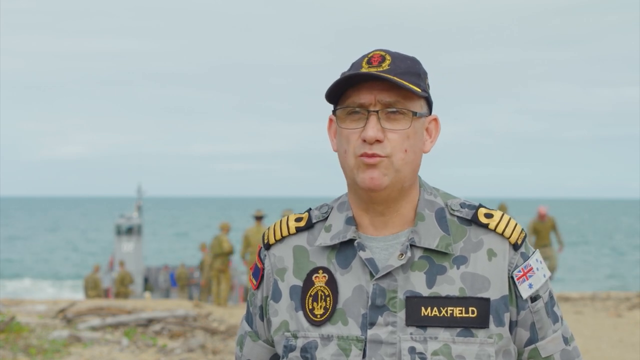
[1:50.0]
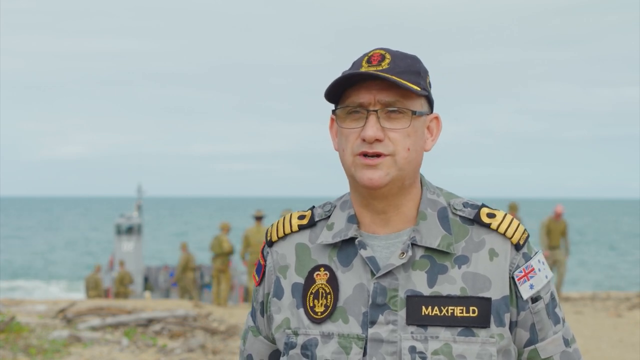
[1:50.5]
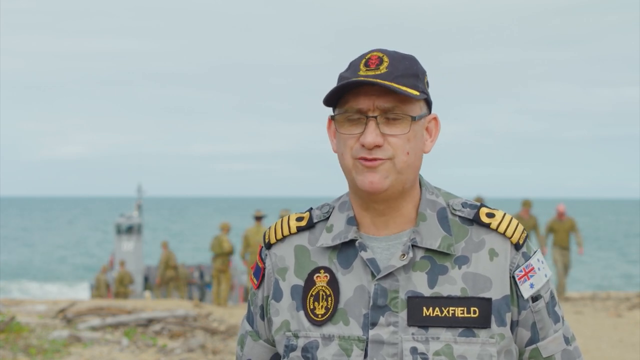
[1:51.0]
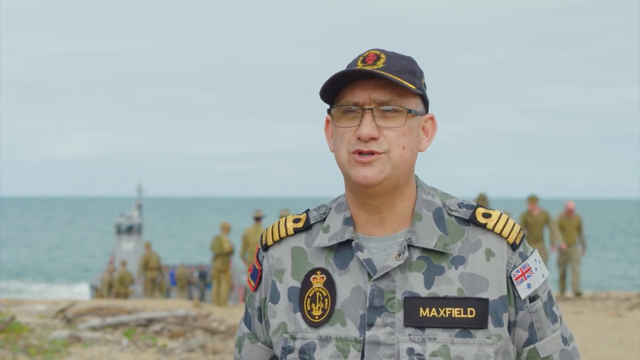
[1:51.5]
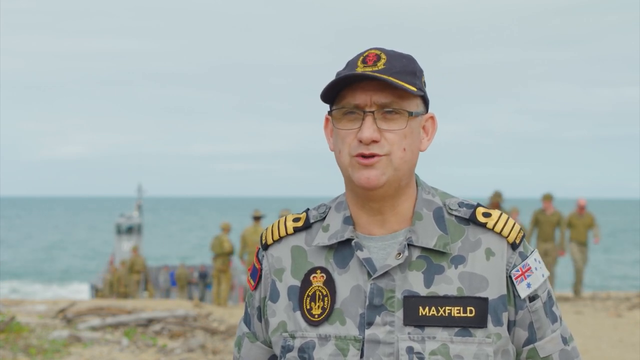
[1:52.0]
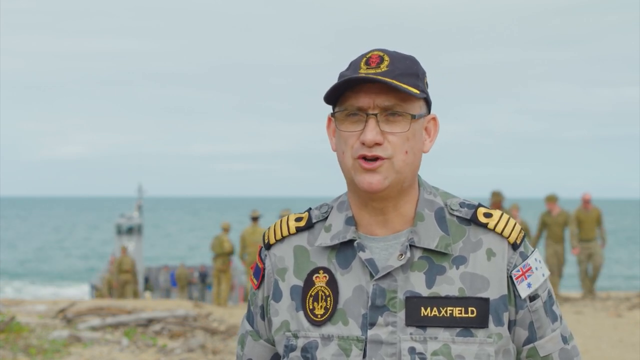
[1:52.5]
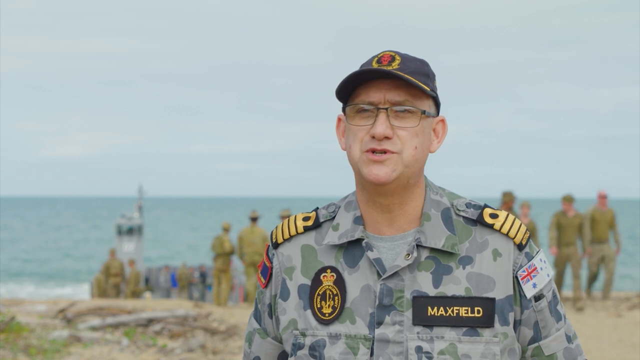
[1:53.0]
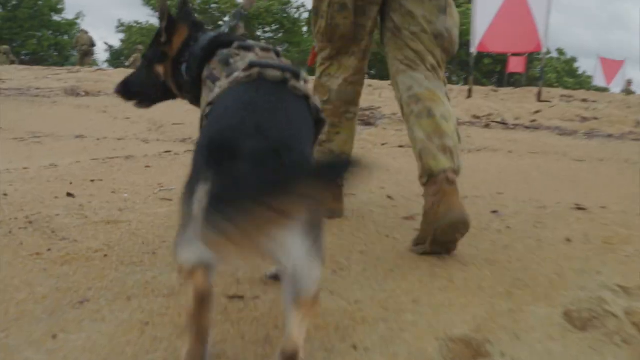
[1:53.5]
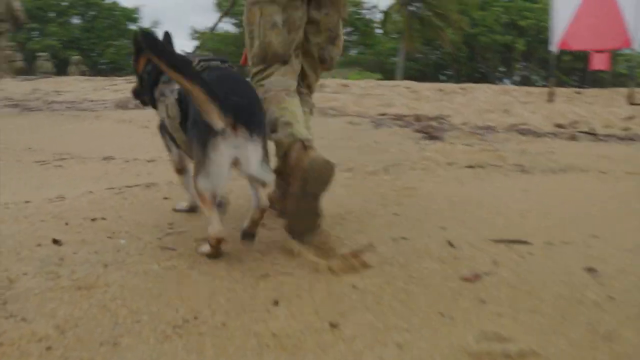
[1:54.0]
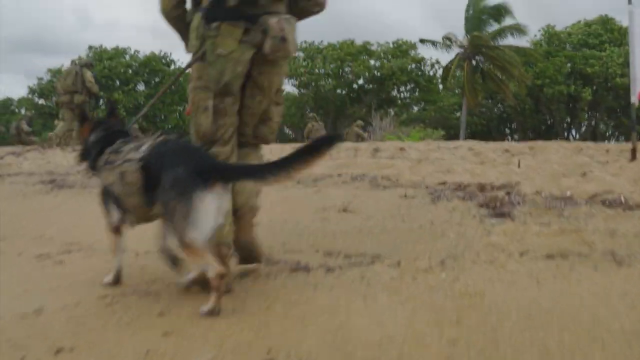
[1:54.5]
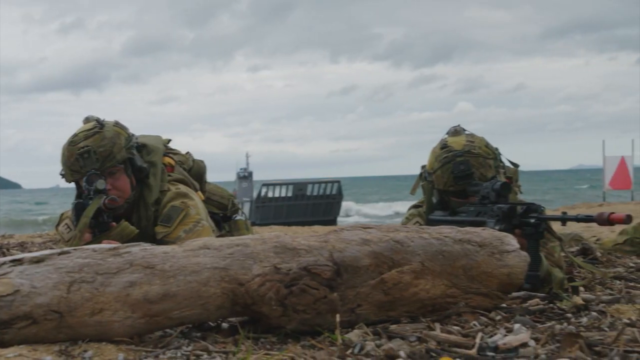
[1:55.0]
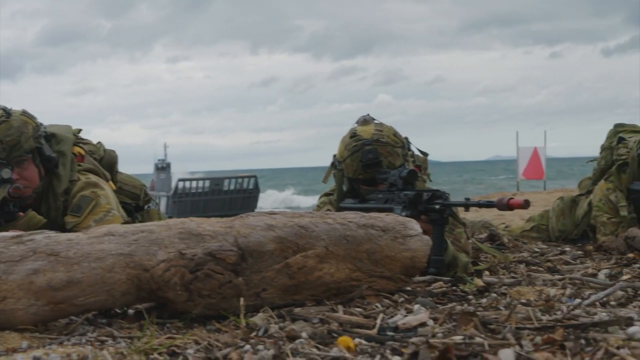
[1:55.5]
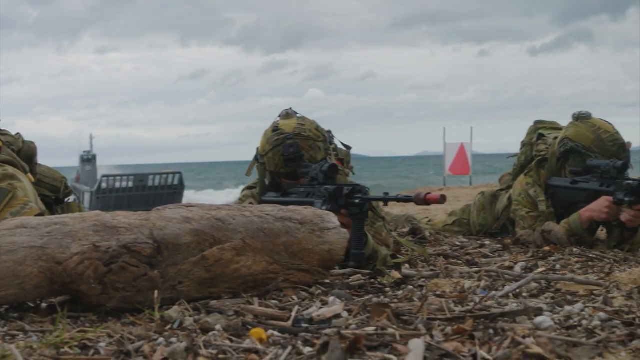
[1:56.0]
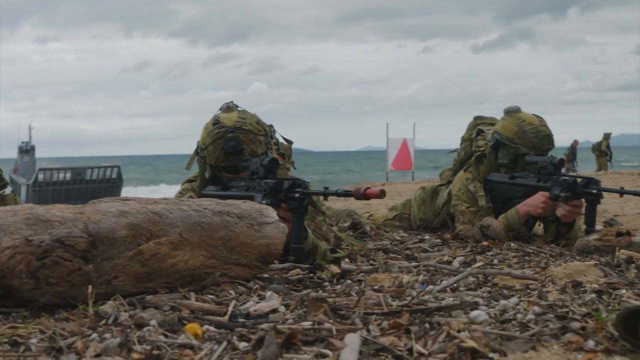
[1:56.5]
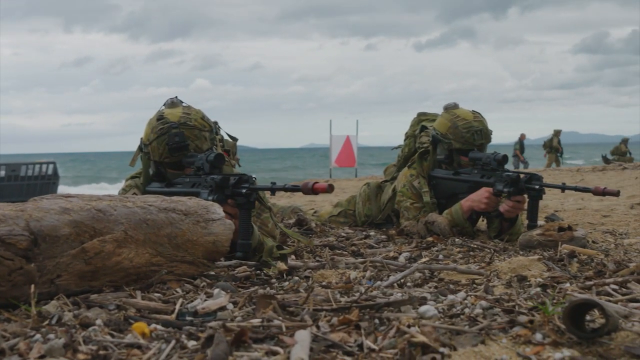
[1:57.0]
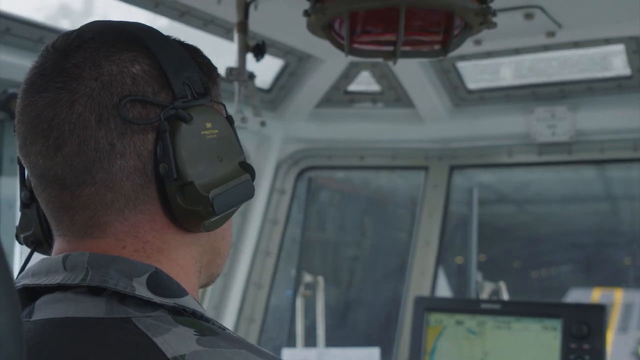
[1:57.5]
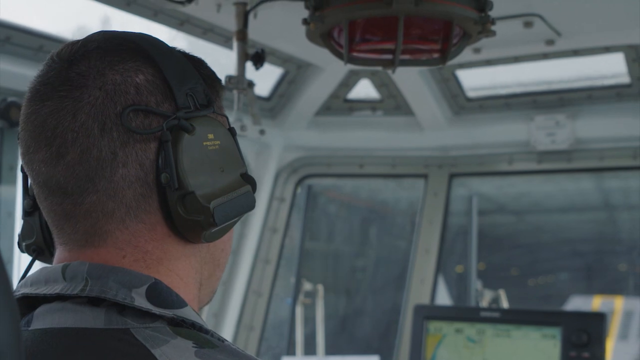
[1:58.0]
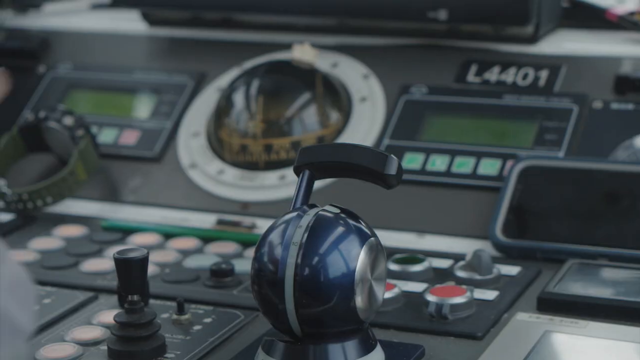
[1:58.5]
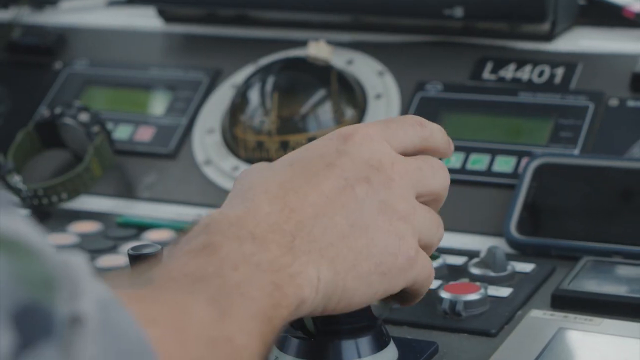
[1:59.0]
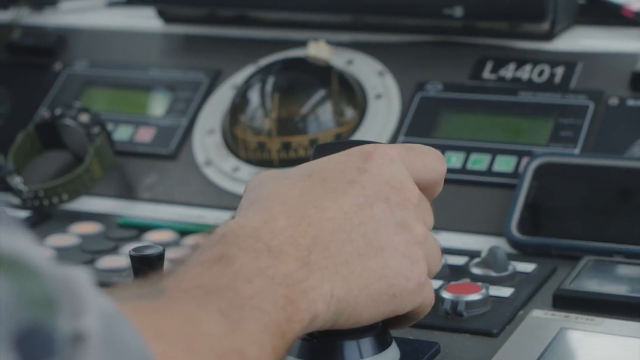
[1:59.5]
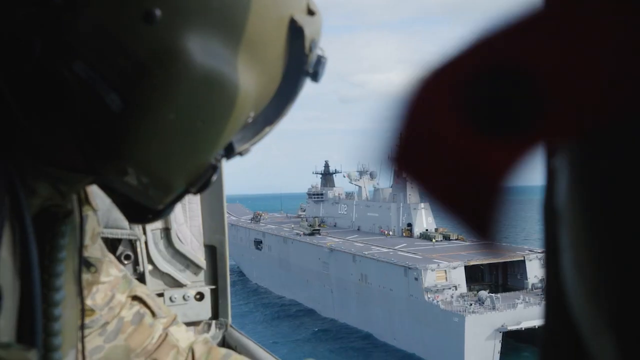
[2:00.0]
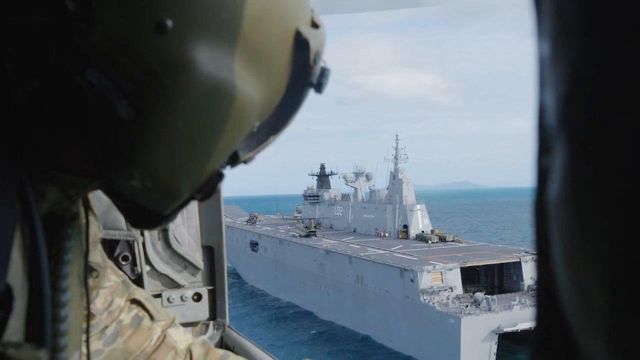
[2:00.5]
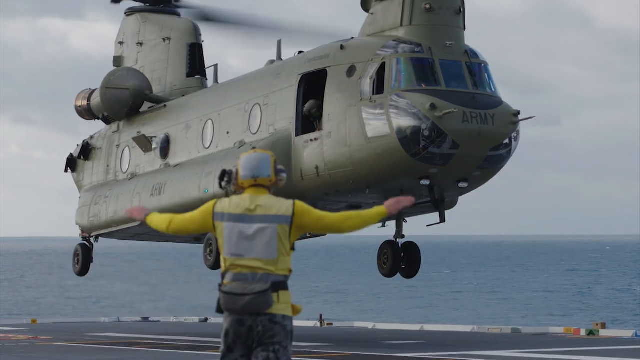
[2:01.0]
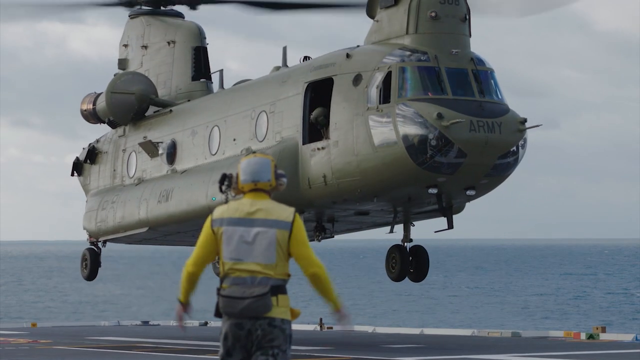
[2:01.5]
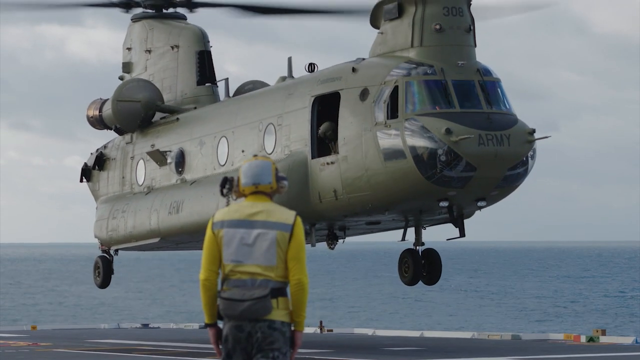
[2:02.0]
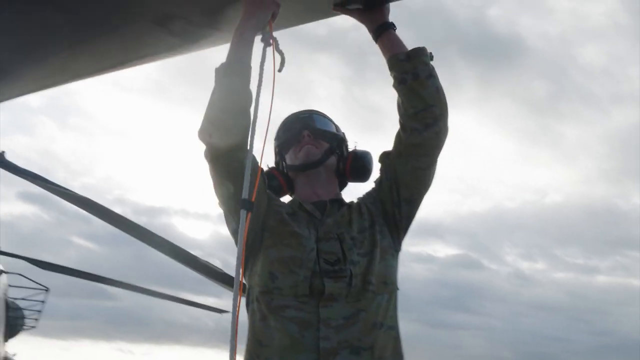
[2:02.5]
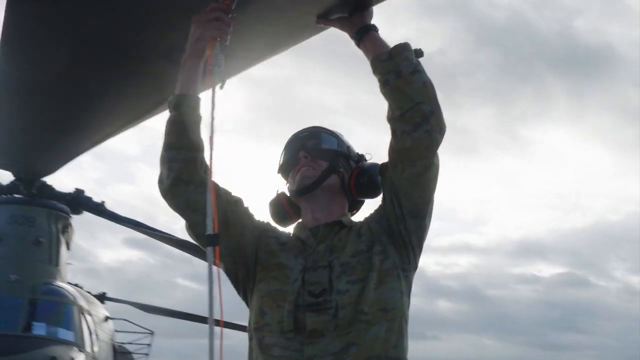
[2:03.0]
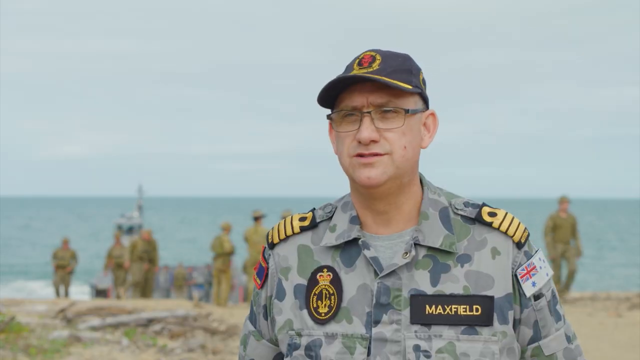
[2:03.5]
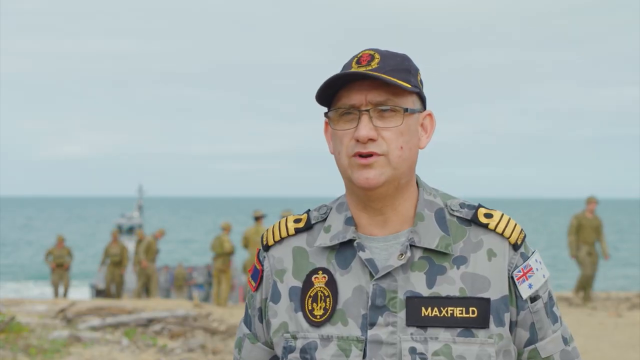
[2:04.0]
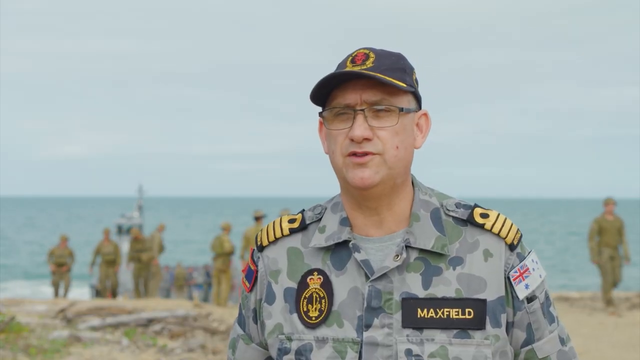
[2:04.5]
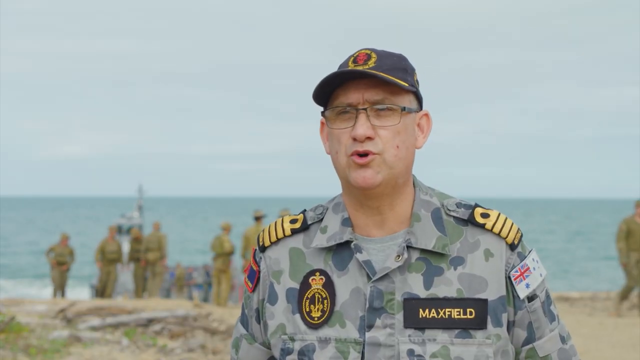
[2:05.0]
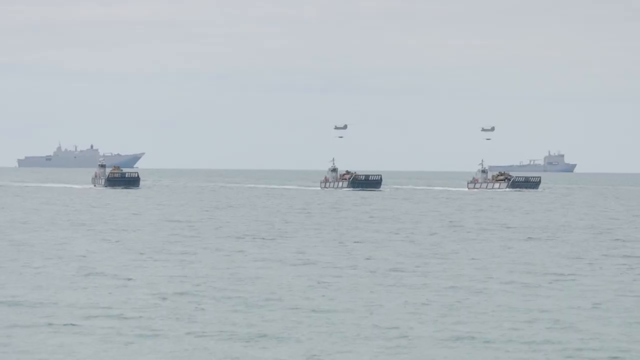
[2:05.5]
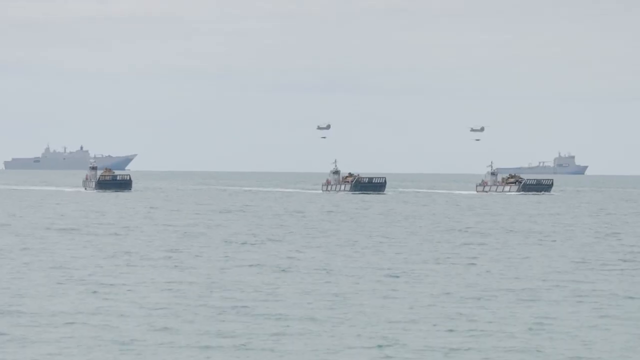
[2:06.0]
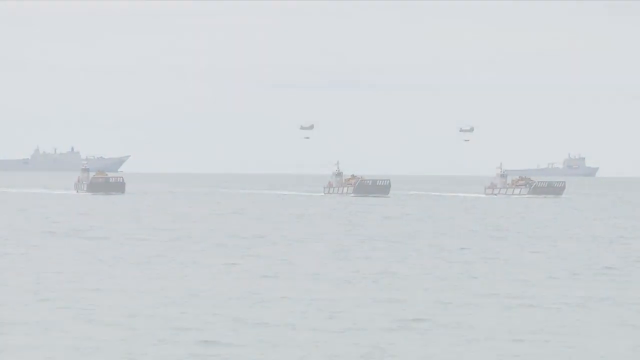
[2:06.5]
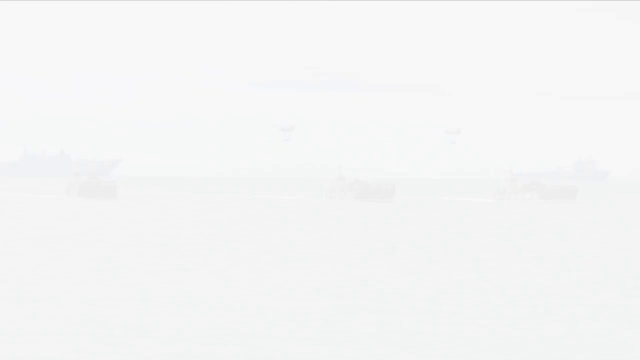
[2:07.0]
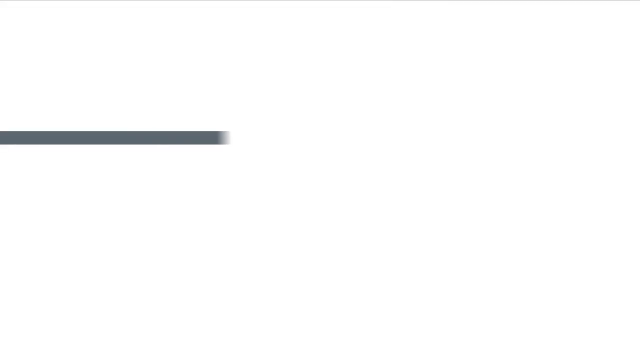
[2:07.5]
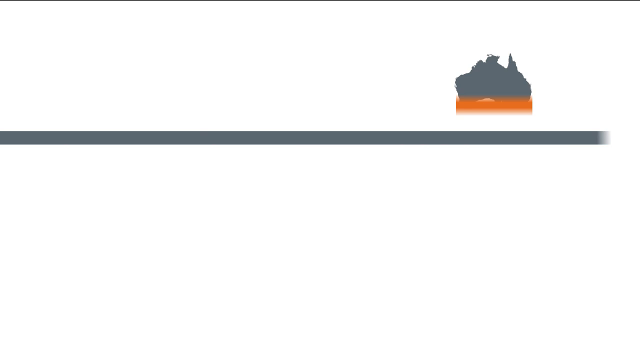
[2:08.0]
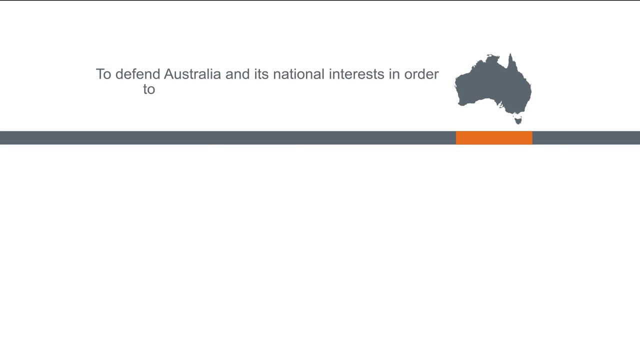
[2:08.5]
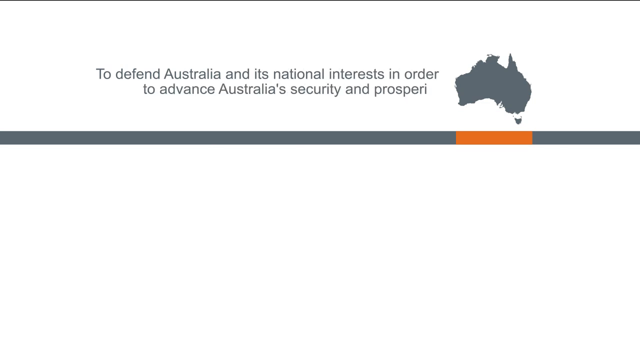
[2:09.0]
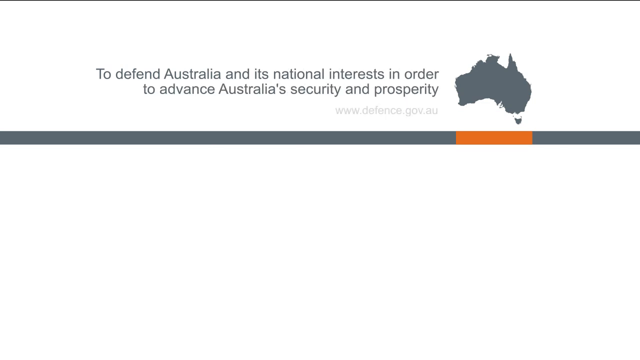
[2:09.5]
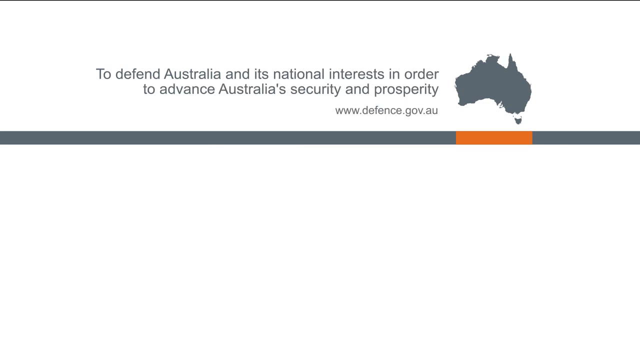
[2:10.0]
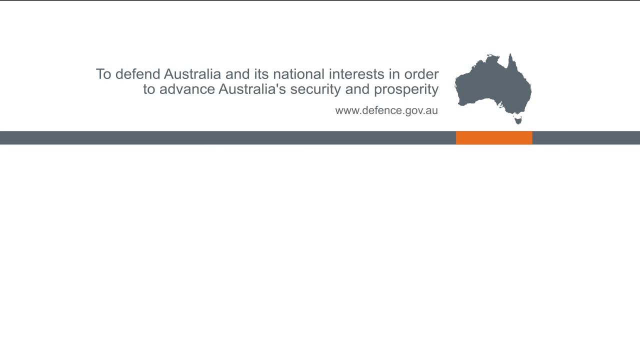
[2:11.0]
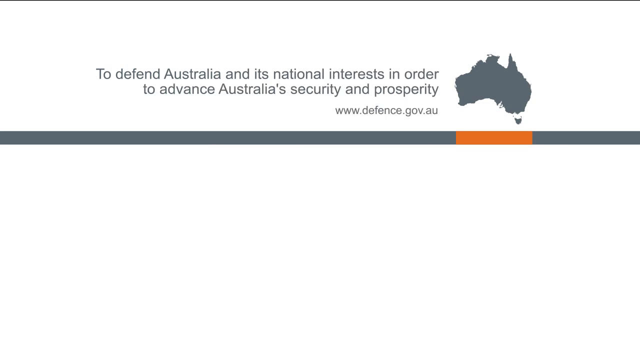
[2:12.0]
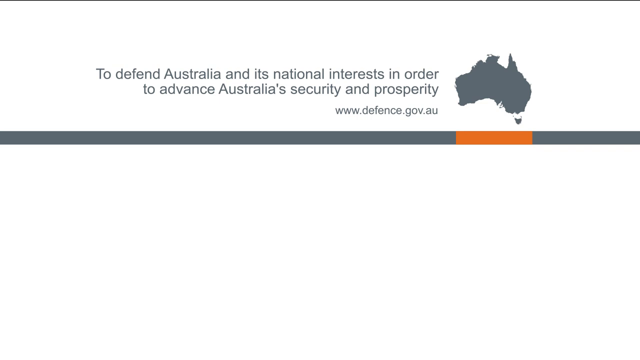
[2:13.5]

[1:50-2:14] A white man in army camouflage, who looks like an army officer, has lapels on his shoulders, a logo on his right chest and the word Maxfield on his left chest, and wears a cap with a logo and glasses. He speaks into the camera, with multiple army personnel on the sand behind him. An army member leads a dog. Three army personnel in army uniform and camouflage lie on the ground with guns in hand, in what looks like a sniper position. The scene moves to what looks like a control room, then an aerial view of the ship. An army helicopter lands while a person in yellow guides it with both hands outstretched, gently moving them up and down. A person then tries to inspect the bottom of the helicopter. Three small ships, two relatively bigger ships and two helicopters in the sky are shown. Text then states "to defend Australia and its national interests, in order to advance Australia's security and prosperity," and a website is given.